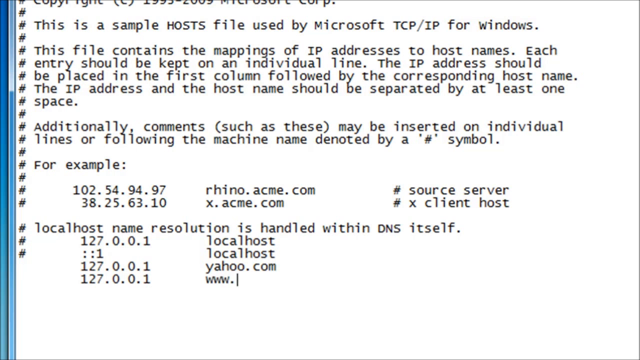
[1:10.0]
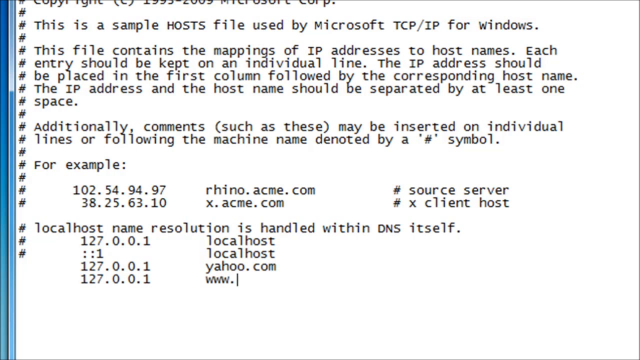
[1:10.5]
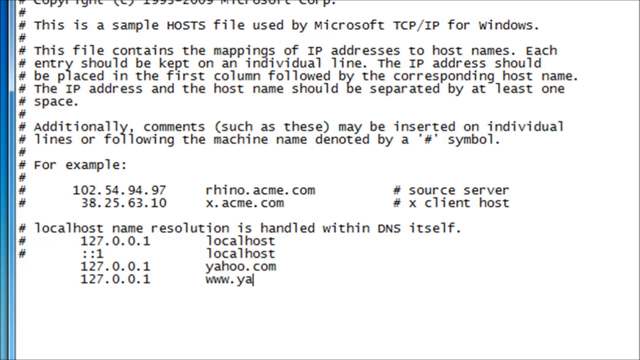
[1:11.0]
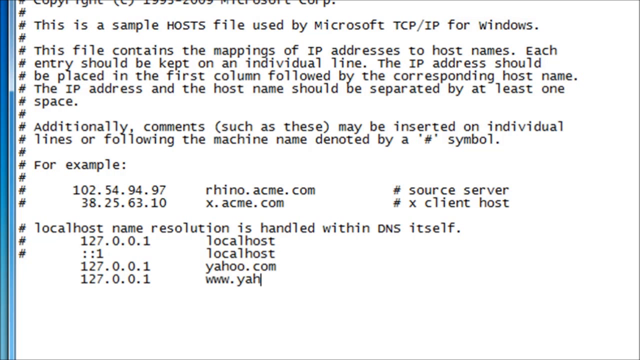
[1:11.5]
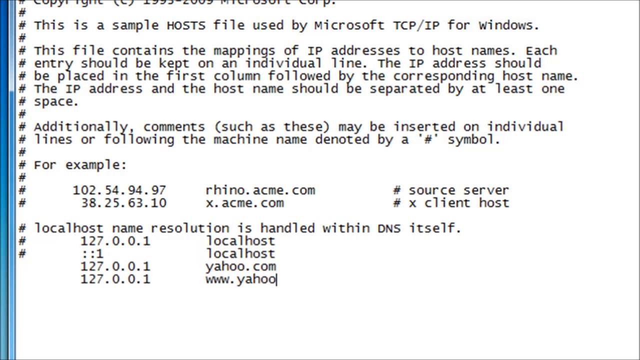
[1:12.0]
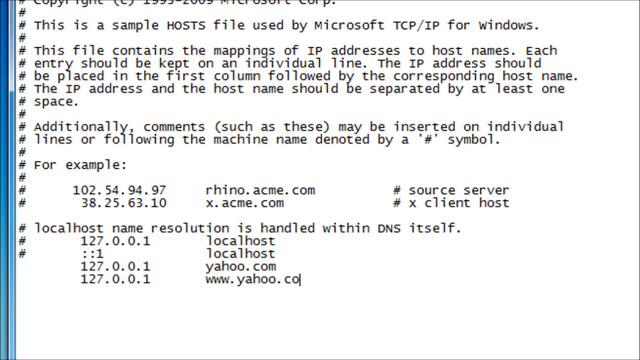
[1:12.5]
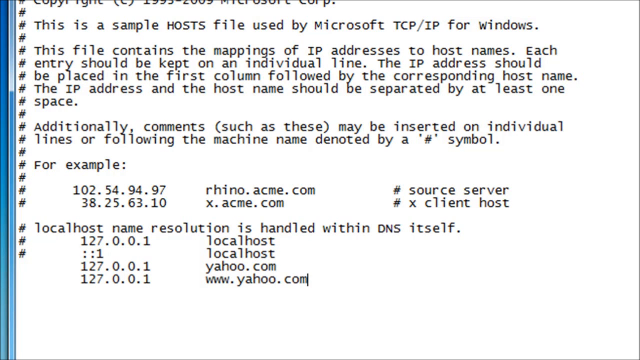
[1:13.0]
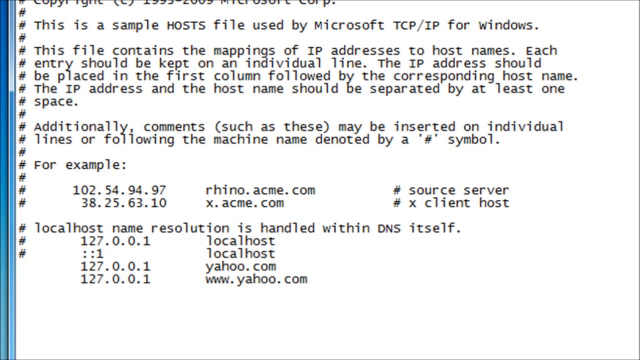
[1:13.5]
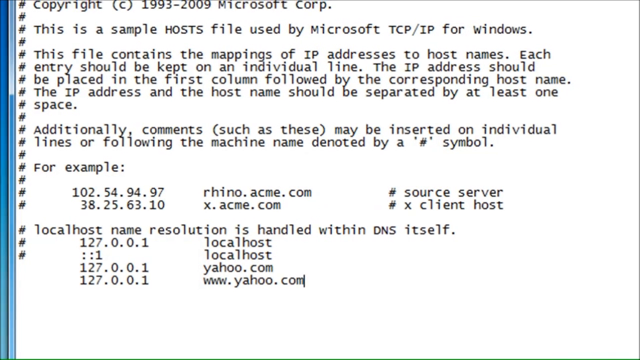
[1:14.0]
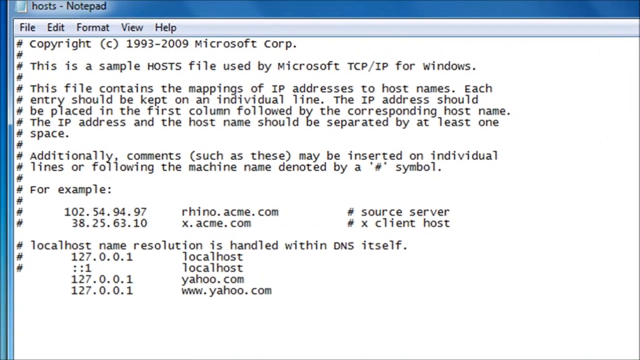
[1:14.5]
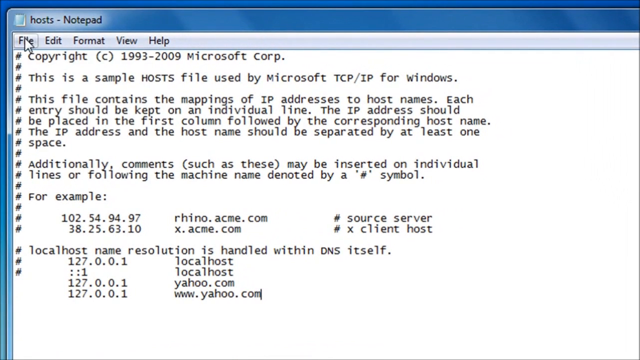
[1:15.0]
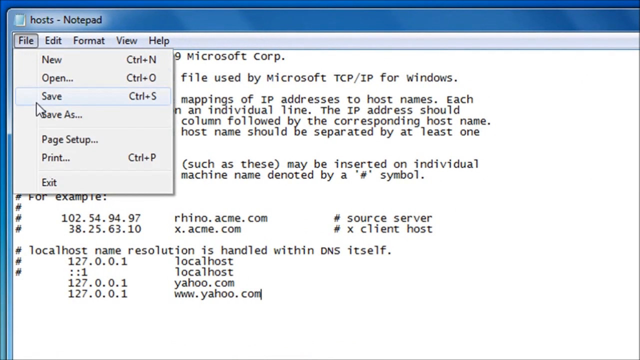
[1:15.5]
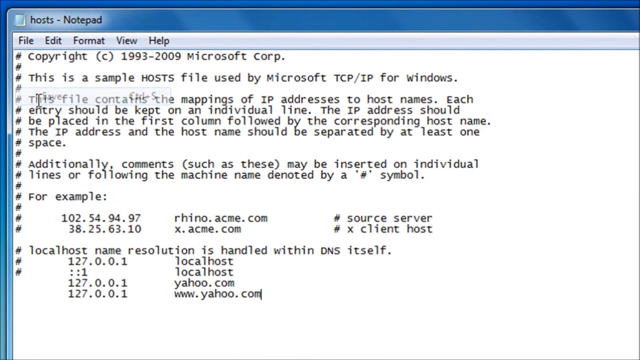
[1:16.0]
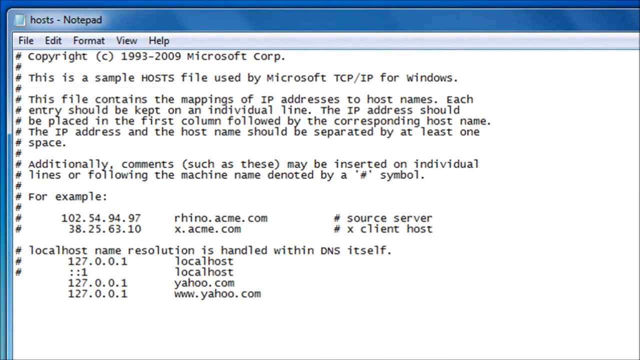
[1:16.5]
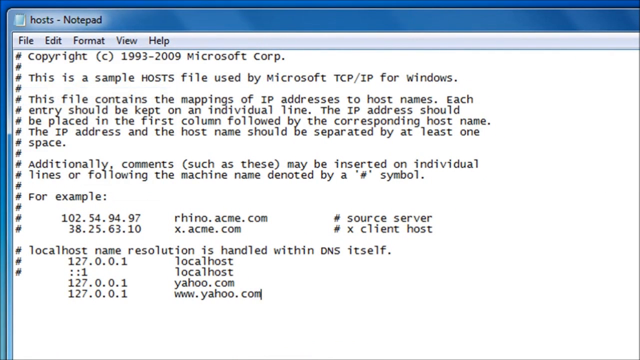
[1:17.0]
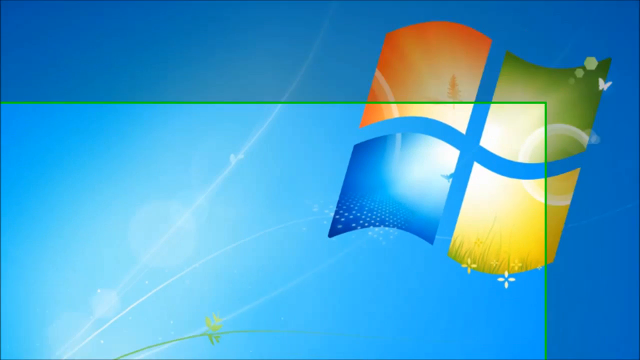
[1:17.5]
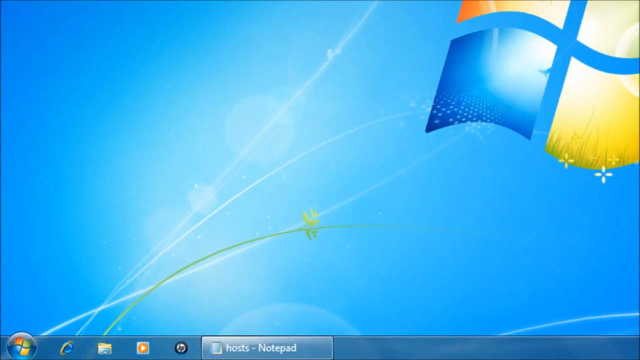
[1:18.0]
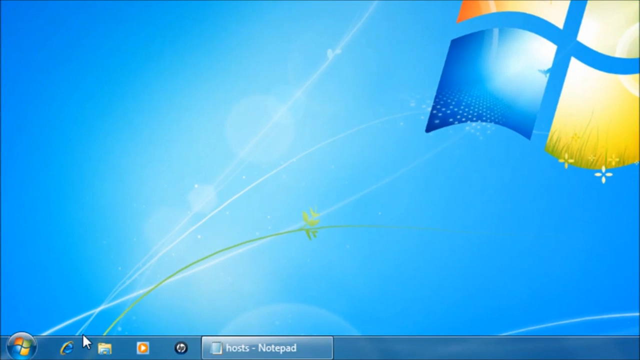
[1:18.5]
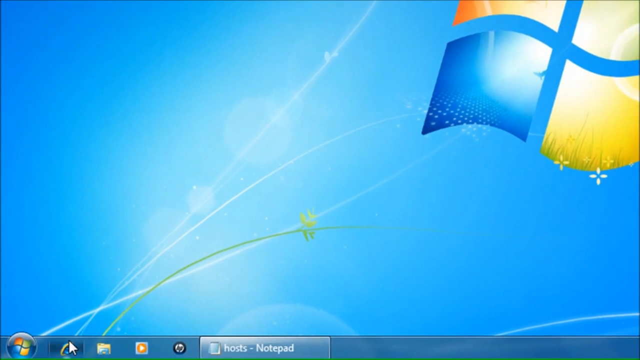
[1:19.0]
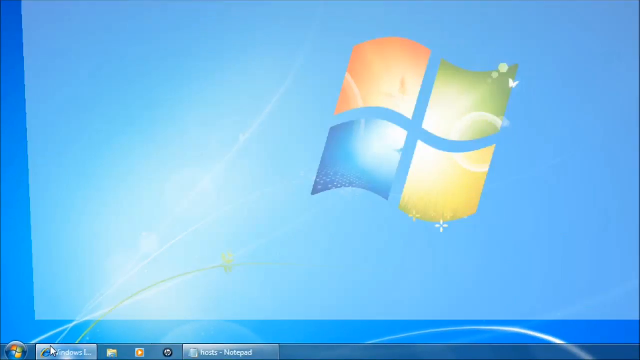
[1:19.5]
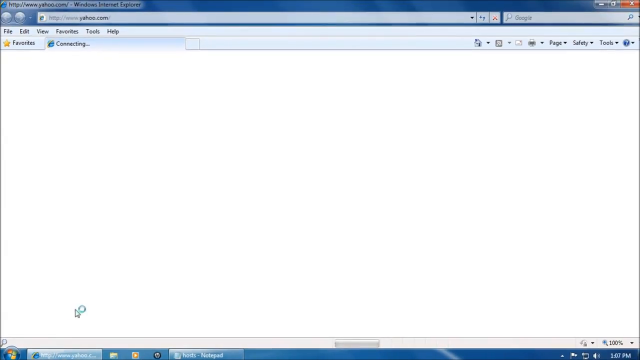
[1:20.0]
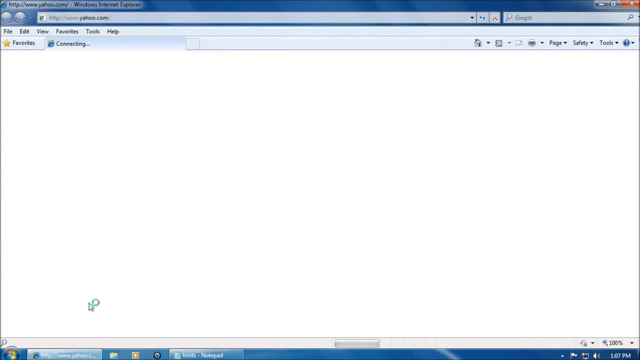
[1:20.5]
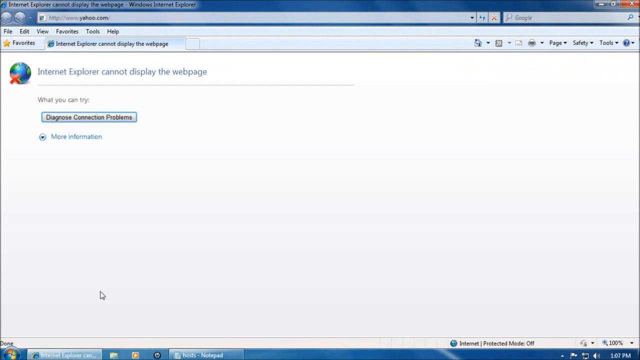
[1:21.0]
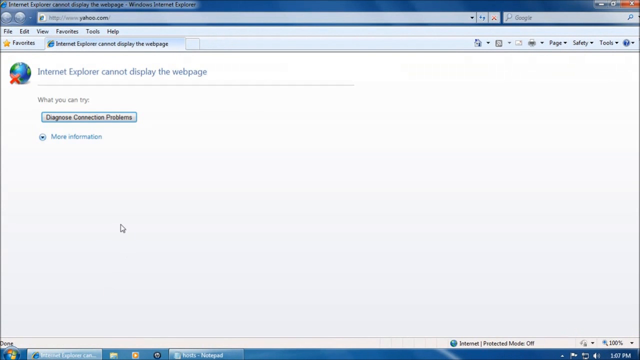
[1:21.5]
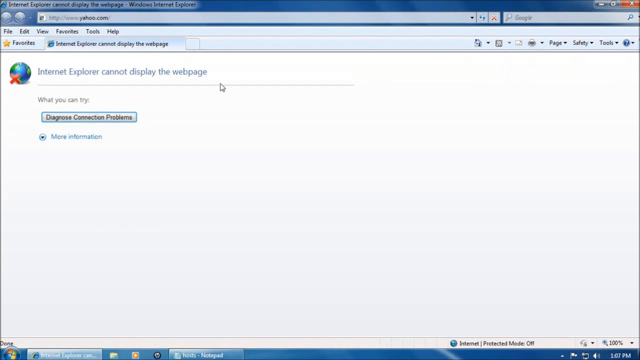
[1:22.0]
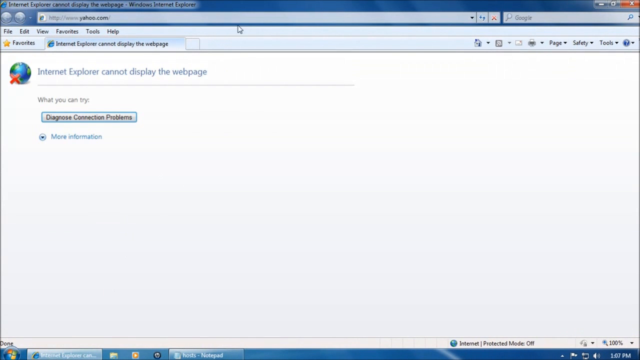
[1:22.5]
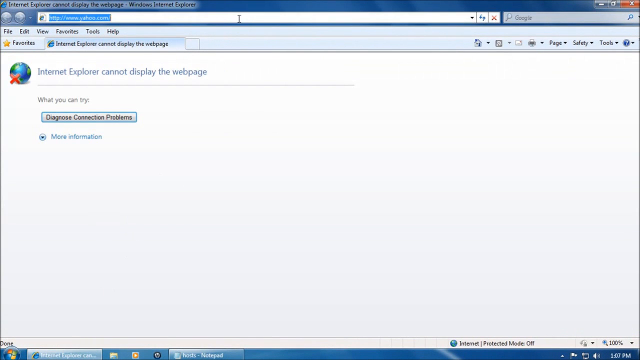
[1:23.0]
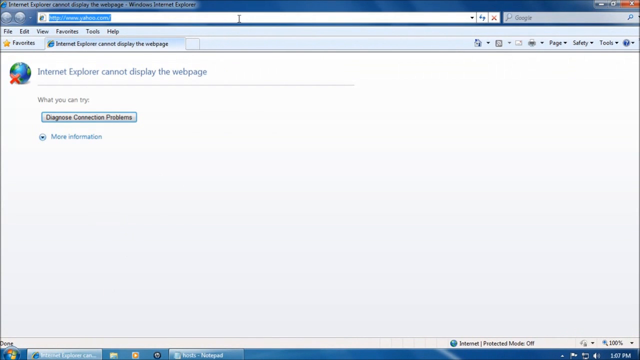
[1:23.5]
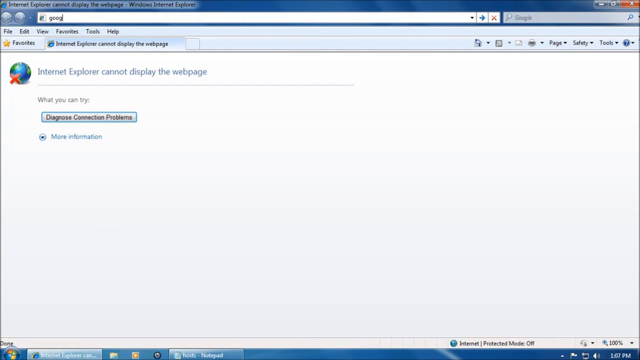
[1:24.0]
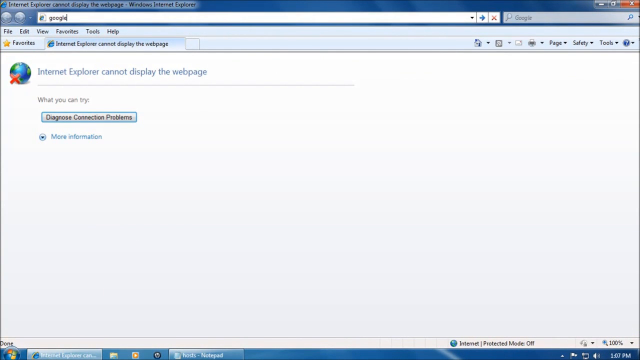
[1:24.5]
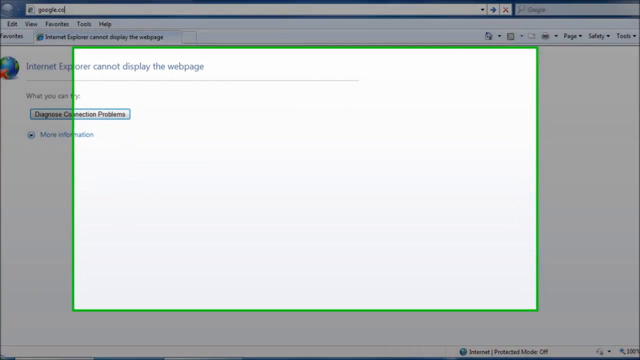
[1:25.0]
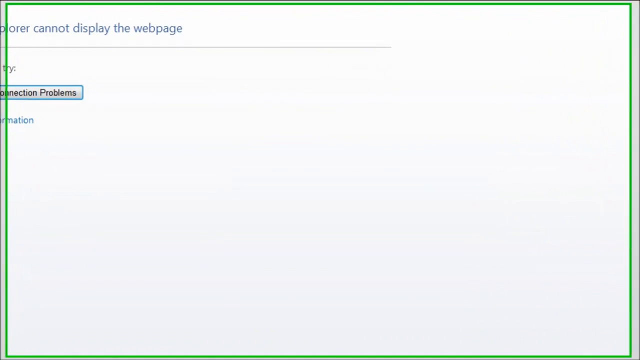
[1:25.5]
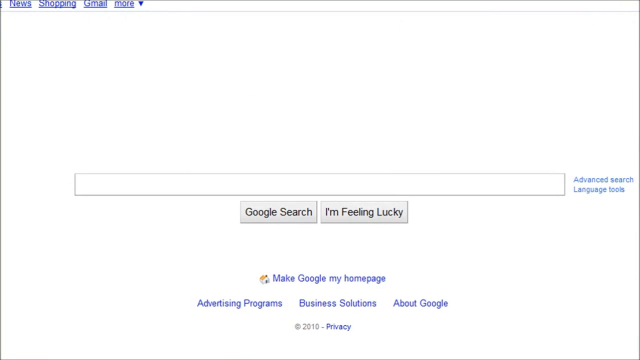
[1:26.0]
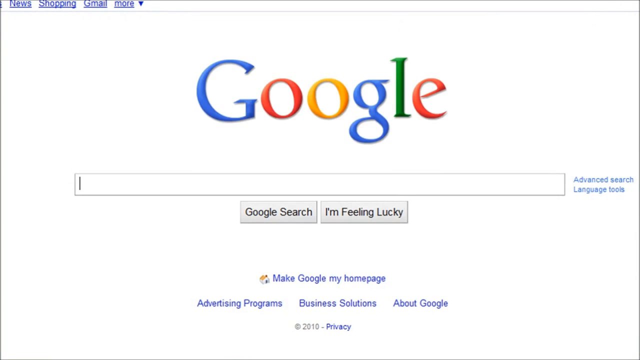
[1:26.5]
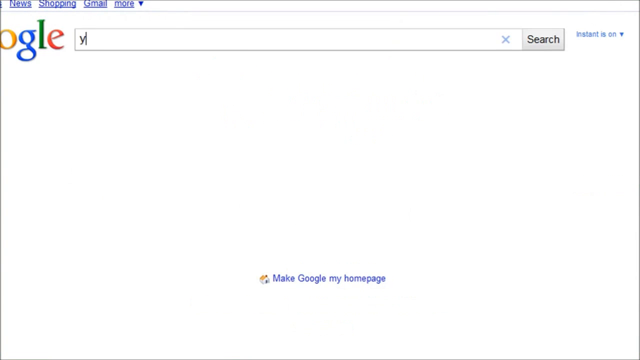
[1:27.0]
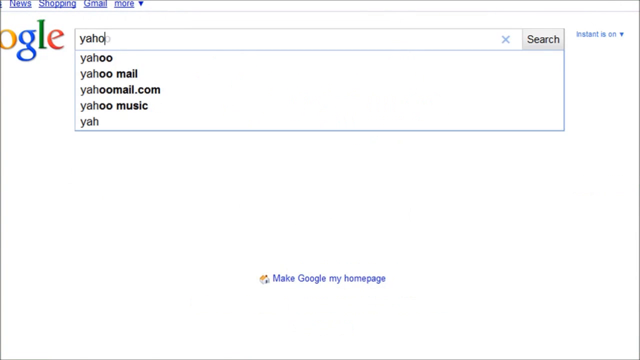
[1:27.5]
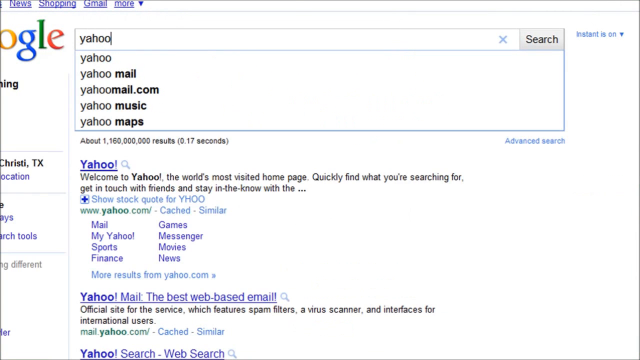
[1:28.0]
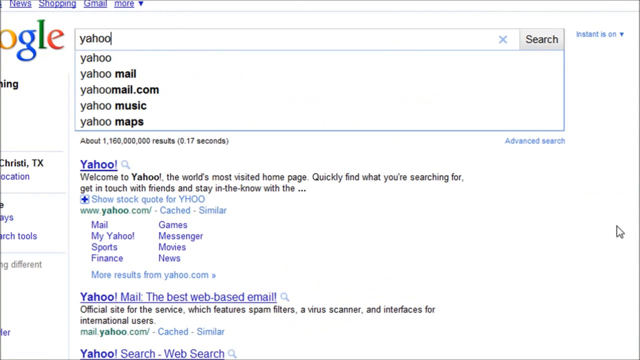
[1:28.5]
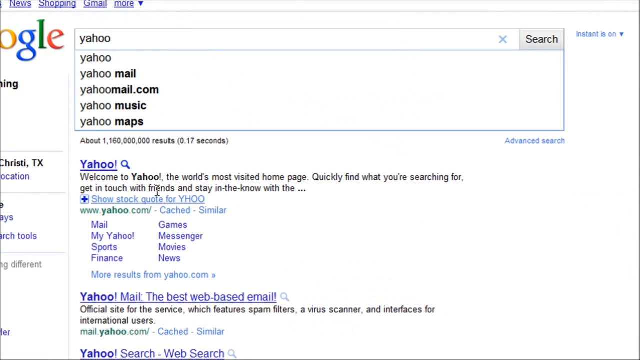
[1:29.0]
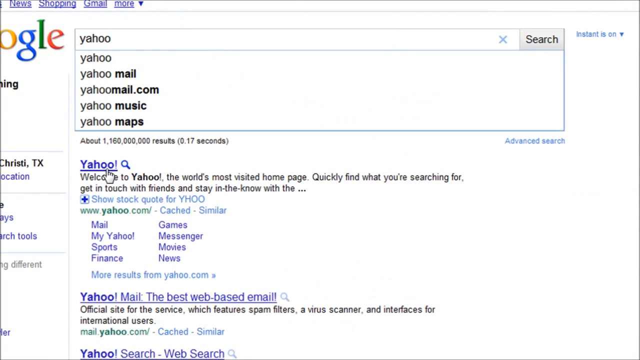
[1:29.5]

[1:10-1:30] The file is saved, and in the browser's home page "google" is typed, then "yahoo" is entered and searched. A search results page appears for Yahoo, reading "welcome to Yahoo, the world's most visited home page. Quickly find what you are searching for, get in touch with friends, and stay in the know", with links for Mail, My Yahoo, Sports, Finance, Games, Messenger, Movies and News, and a link for more results from yahoo.com.